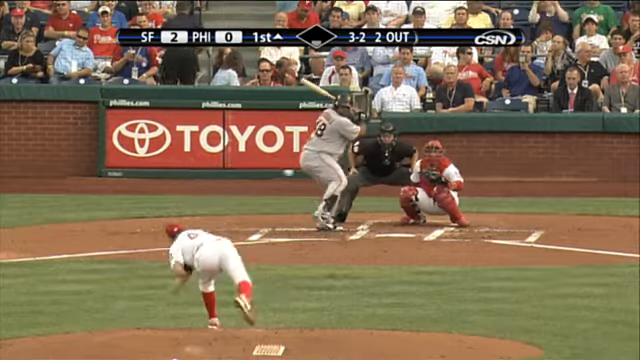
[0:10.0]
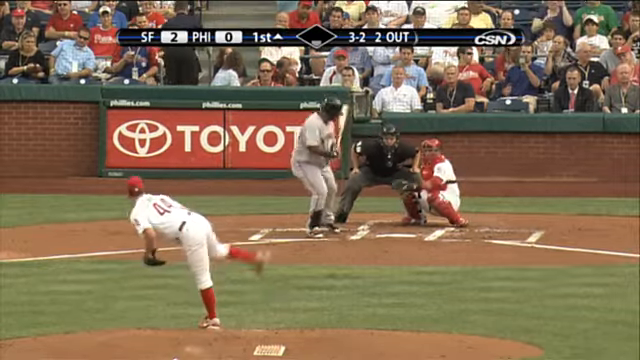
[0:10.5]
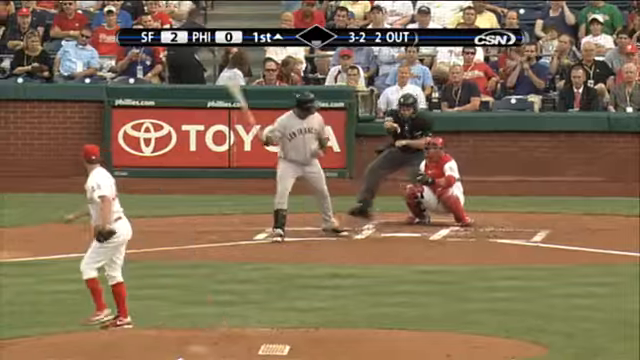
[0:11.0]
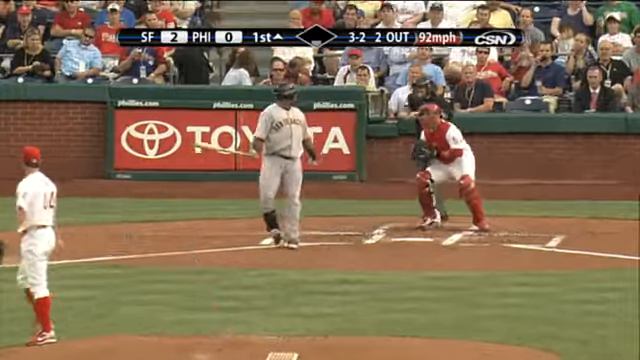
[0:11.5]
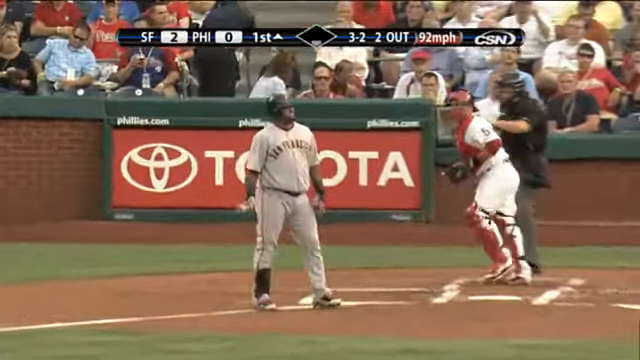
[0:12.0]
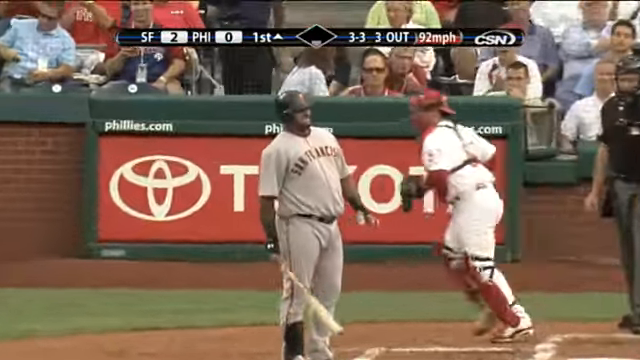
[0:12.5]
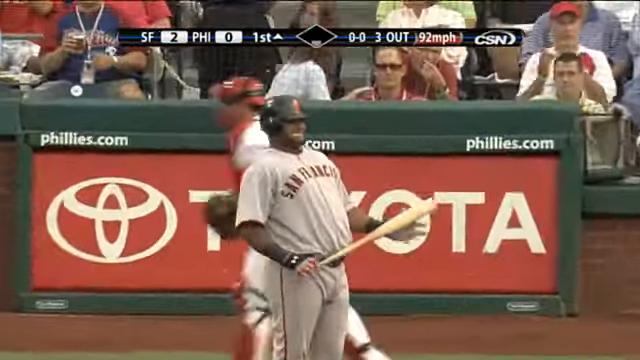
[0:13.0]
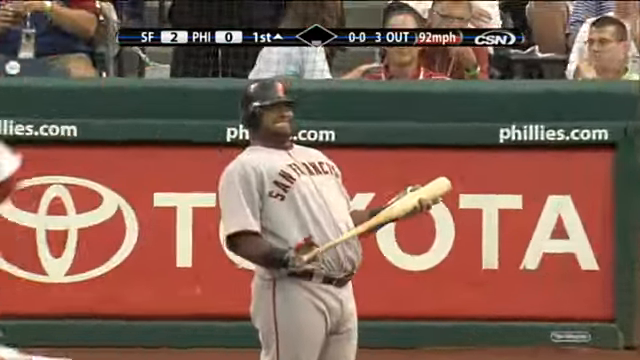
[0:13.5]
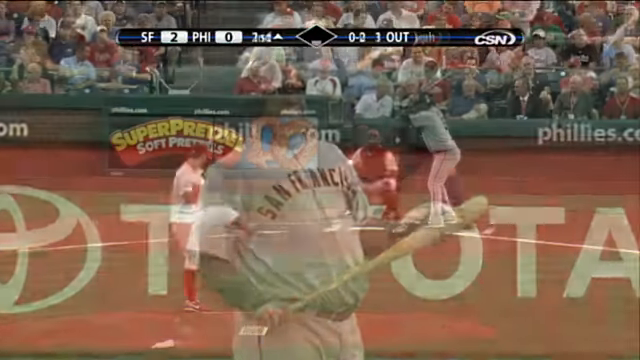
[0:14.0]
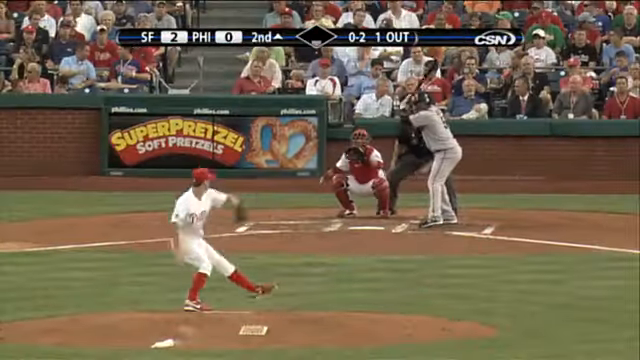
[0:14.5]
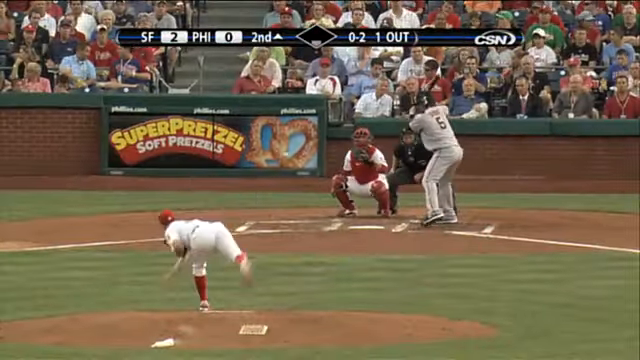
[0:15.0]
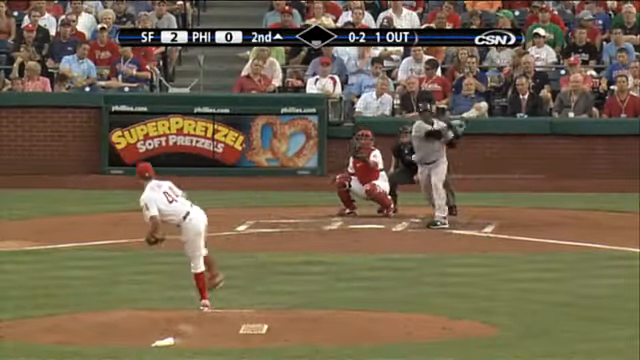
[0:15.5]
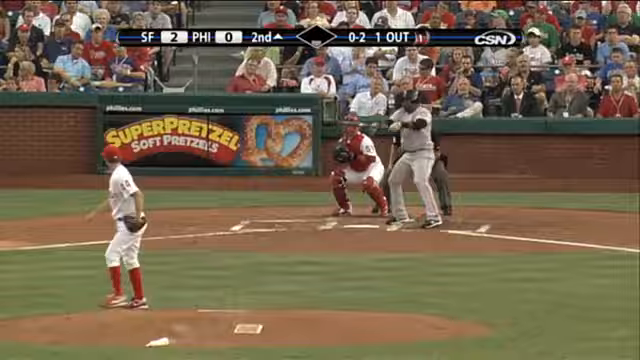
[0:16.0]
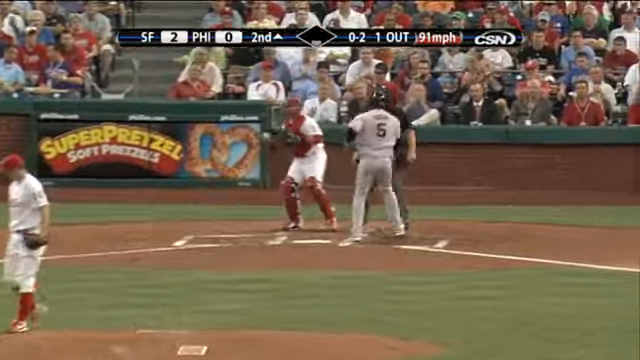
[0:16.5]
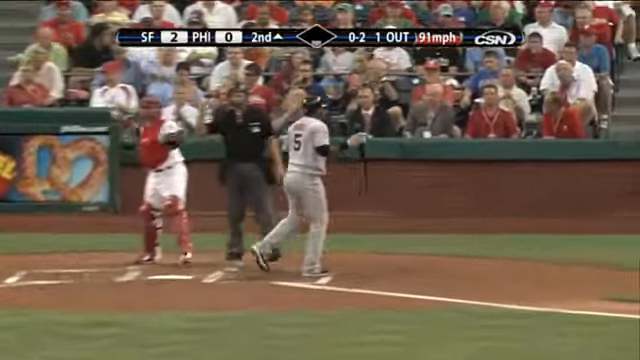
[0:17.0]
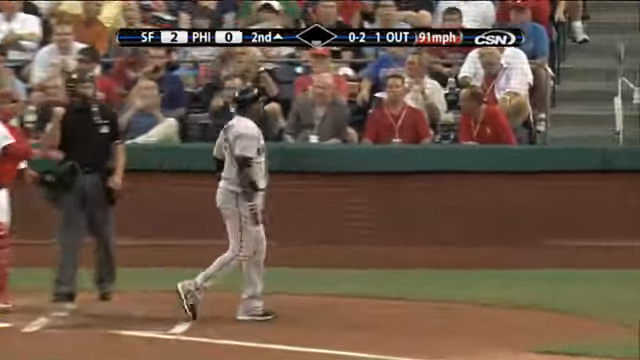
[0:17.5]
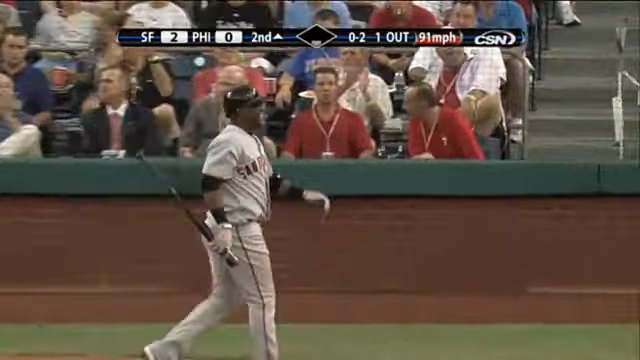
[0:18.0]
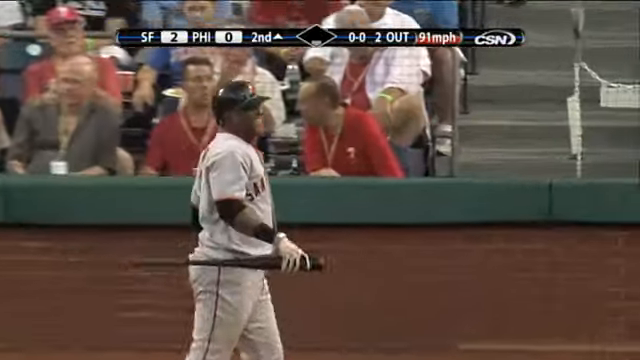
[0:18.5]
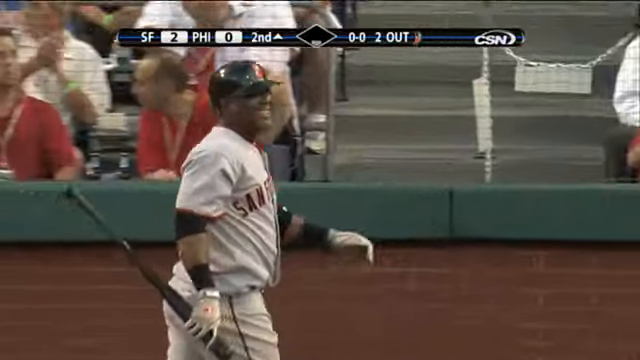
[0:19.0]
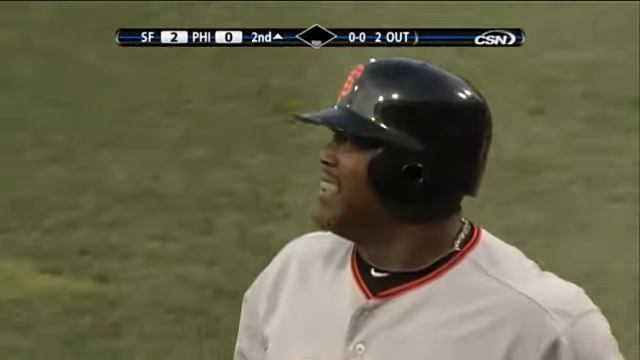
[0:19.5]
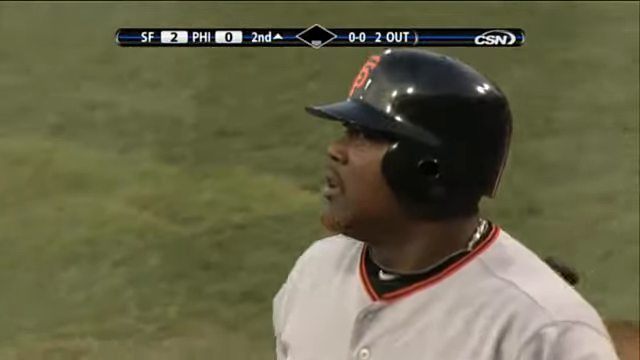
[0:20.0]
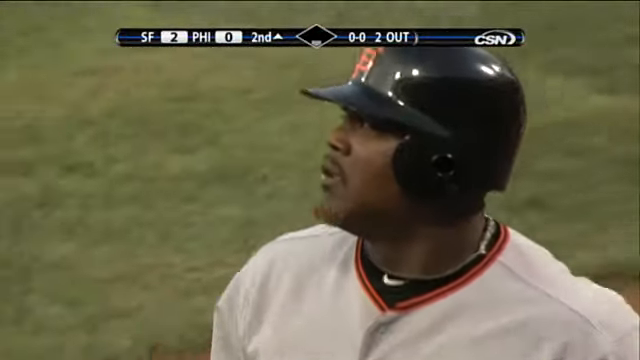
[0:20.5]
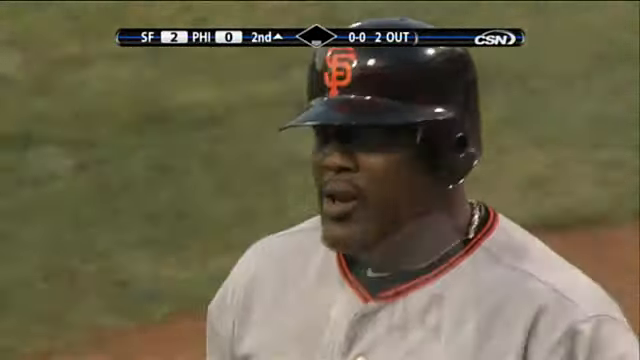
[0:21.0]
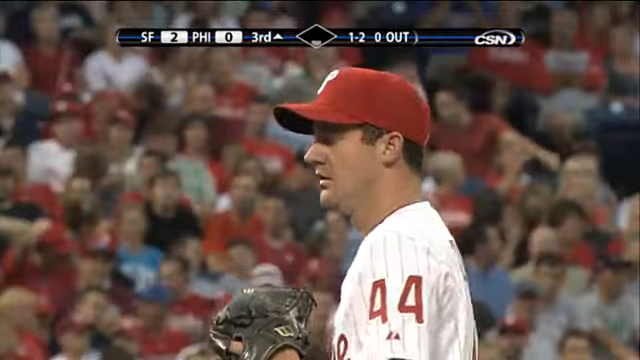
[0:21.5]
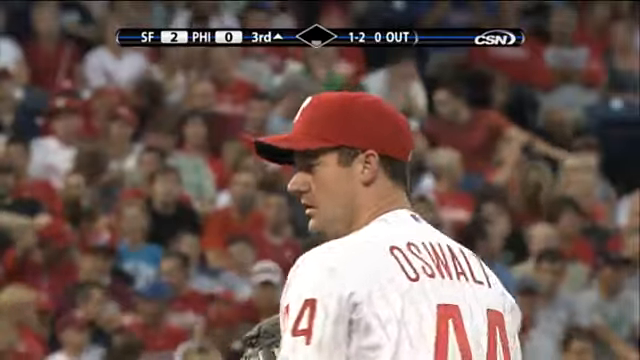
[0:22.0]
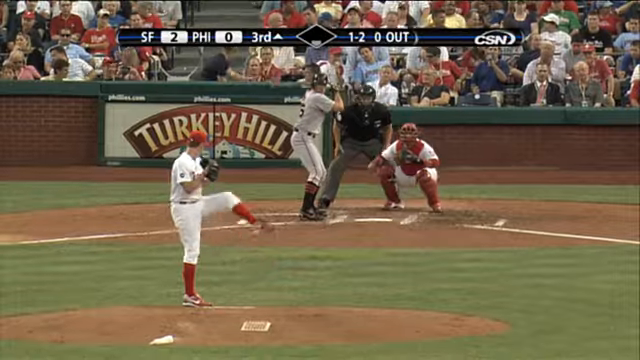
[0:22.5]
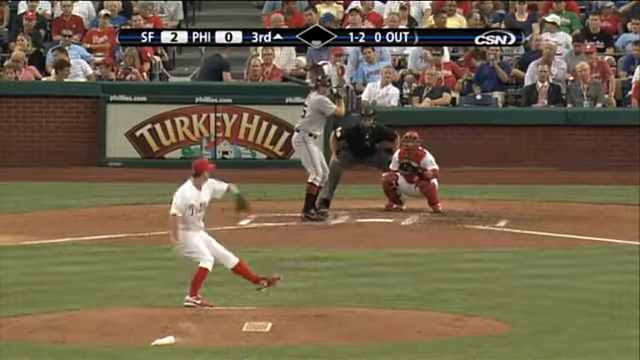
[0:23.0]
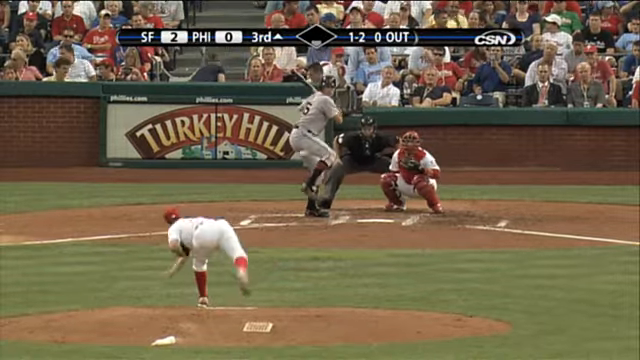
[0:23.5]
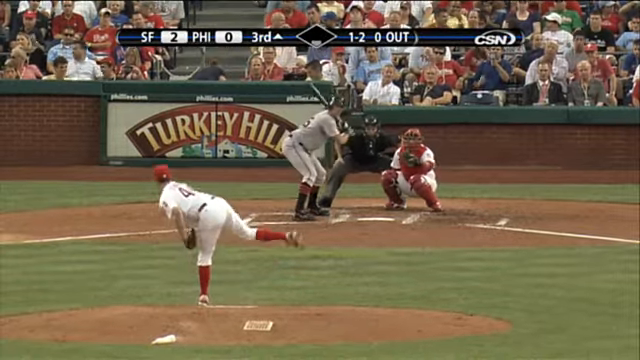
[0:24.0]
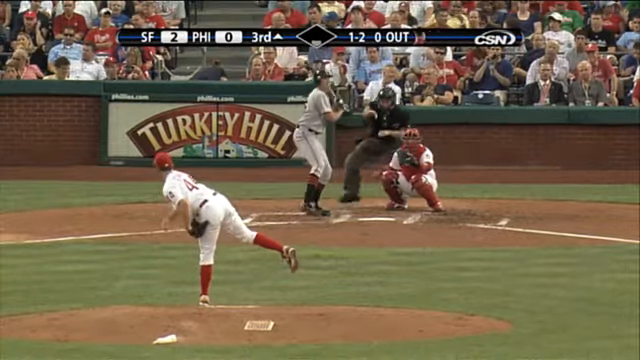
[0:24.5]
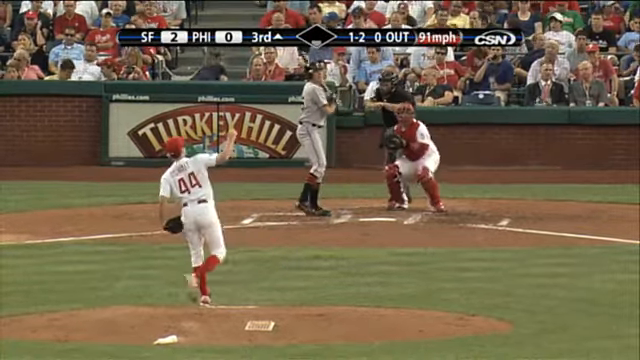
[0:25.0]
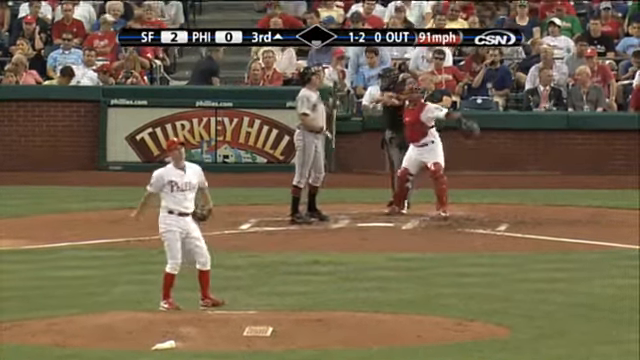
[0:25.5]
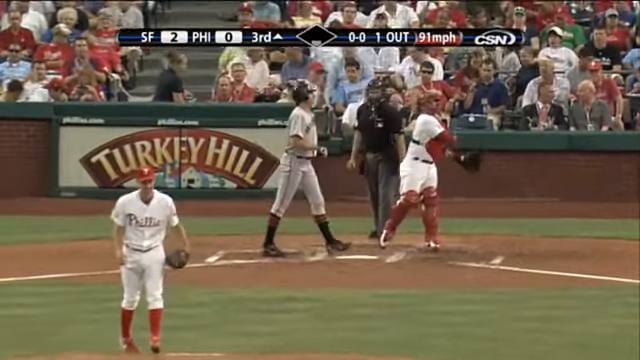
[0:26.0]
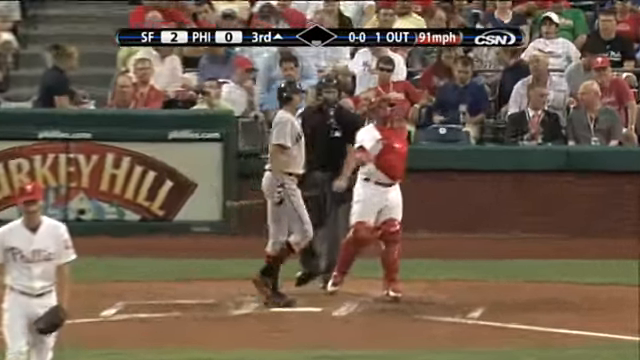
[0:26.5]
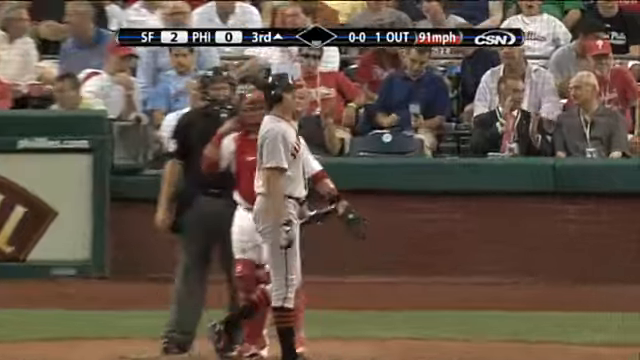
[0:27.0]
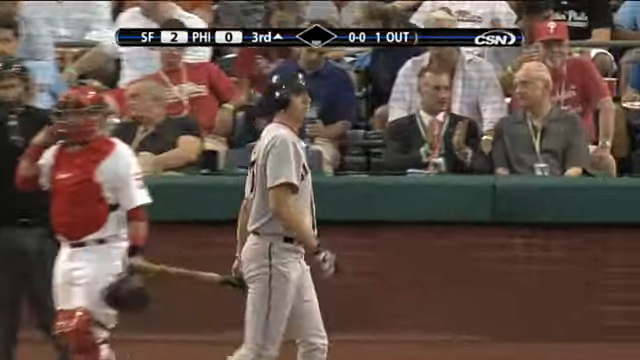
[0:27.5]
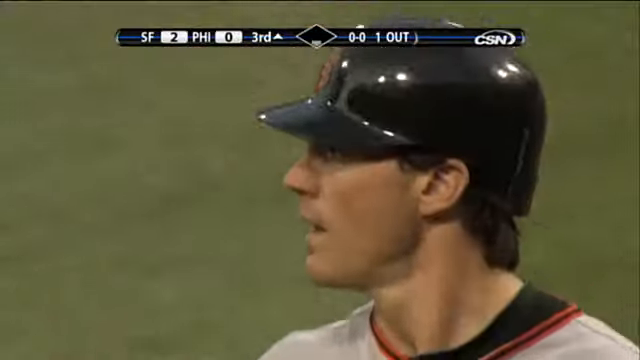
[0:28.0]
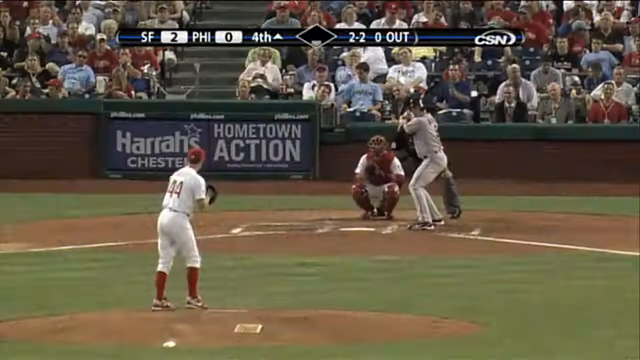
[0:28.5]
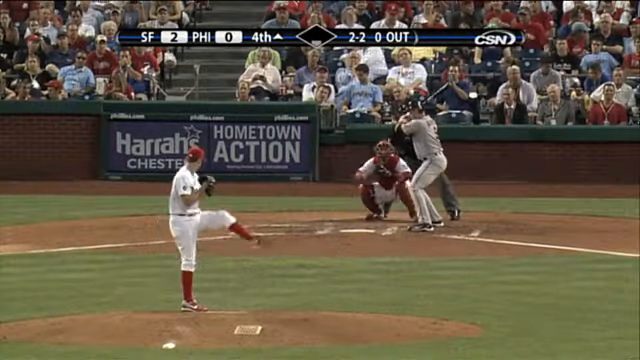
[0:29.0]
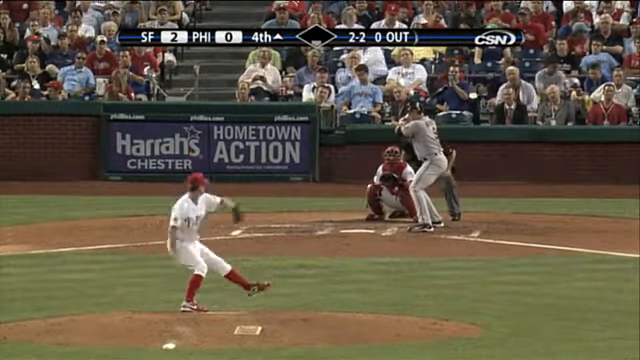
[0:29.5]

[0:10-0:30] The pitch comes right down the middle; the batter apparently thinks it is a ball, on what seems to be a three-two count. He is about to let go of the bat when he suddenly looks back, and the umpire turns and rings him up. The batter is in kind of dismay, and the Phillies catcher trots off, looking at him for a moment. A zoomed-in shot follows as soon as he is struck out. On the back wall to the left of the catcher is a Super Pretzels advertisement: "super pretzels" in big, kind of puffy-looking yellow letters, and underneath it "soft pretzels" in text two or three points smaller, to the right. It has a picture of salted pretzels on a blue background, and right above that, on a green padded-looking surface, "phillies.com" appears three different times. Another batter, number five, comes up and is struck out on three straight pitches, the last a kind of fastball up and outside that looks like it was only 91 but was a rising fastball. He kind of looks around. Another pitch sequence follows; the strikeouts seem to be all in a row. Three players are kind of watching and looking. On an outside pitch, the batter gets rung up on a one-two count and walks away slowly; that batter was the pitcher, Zito.